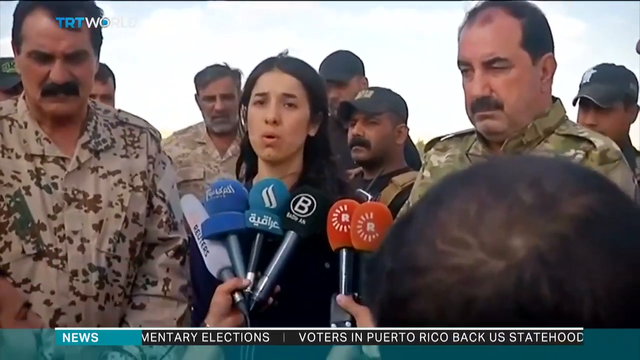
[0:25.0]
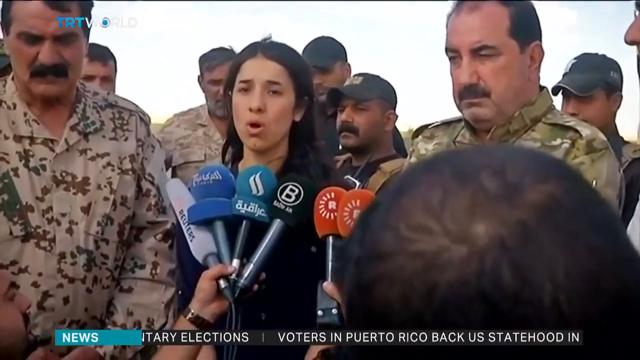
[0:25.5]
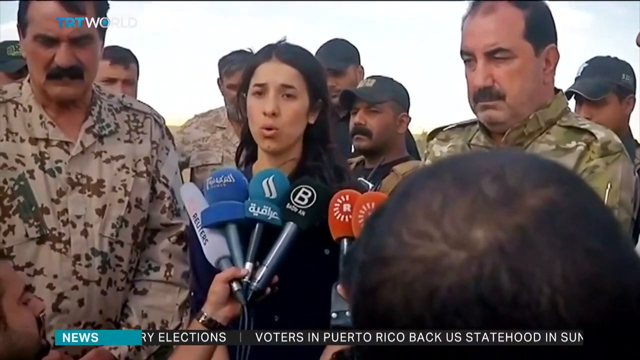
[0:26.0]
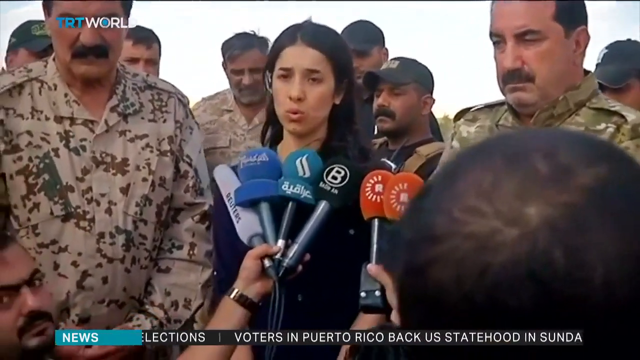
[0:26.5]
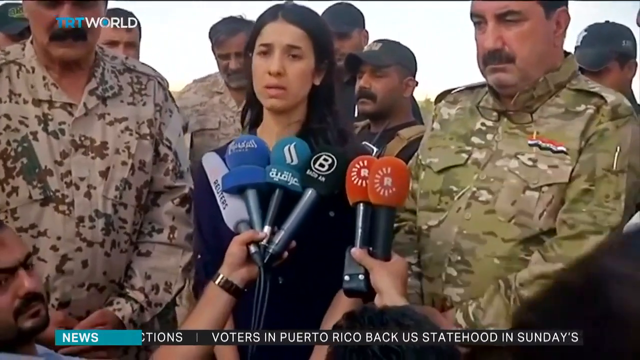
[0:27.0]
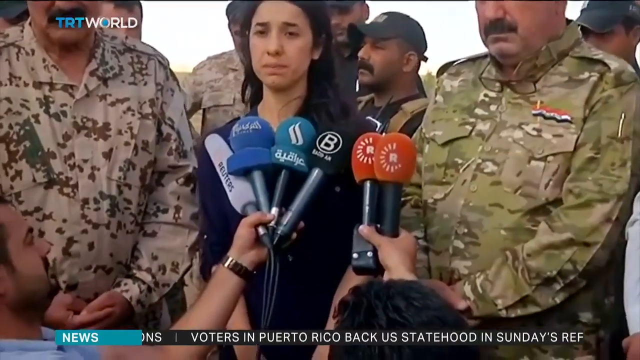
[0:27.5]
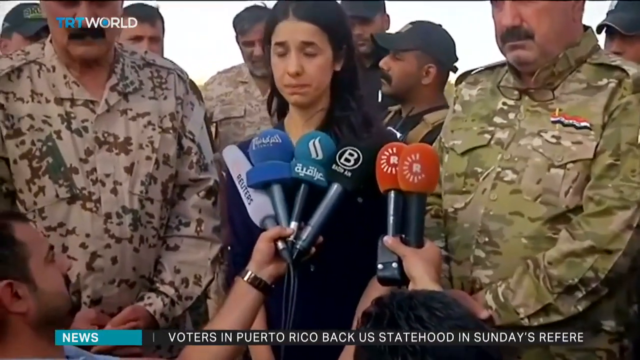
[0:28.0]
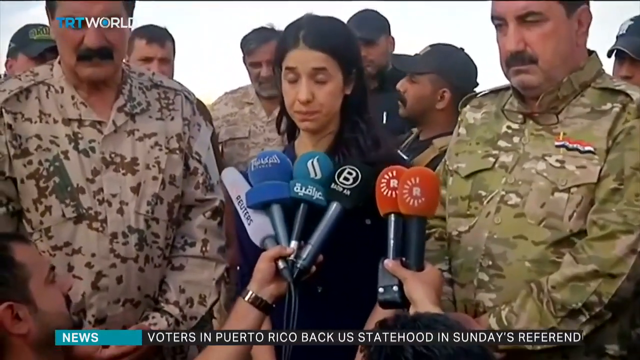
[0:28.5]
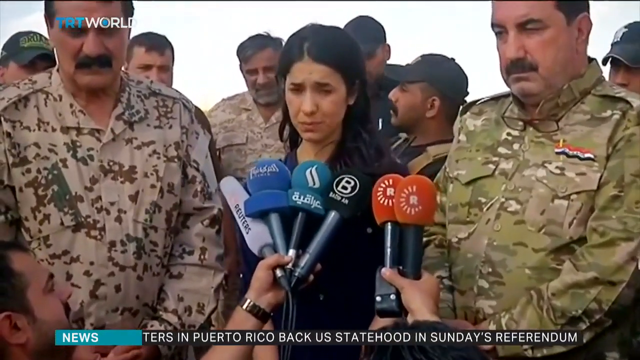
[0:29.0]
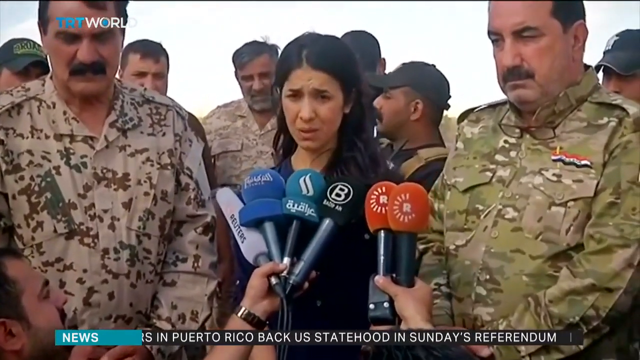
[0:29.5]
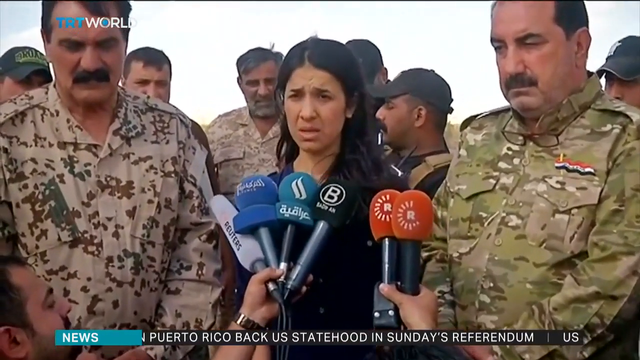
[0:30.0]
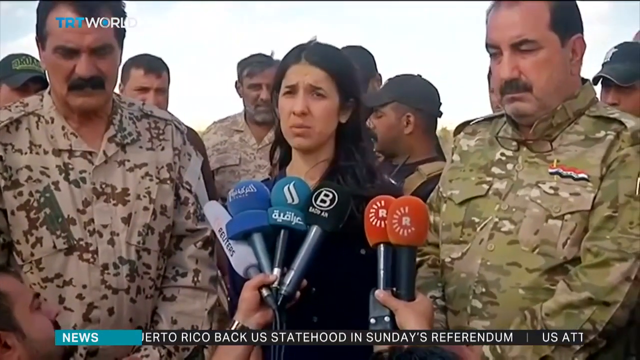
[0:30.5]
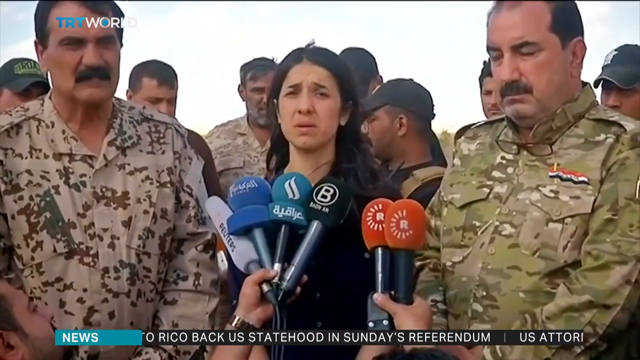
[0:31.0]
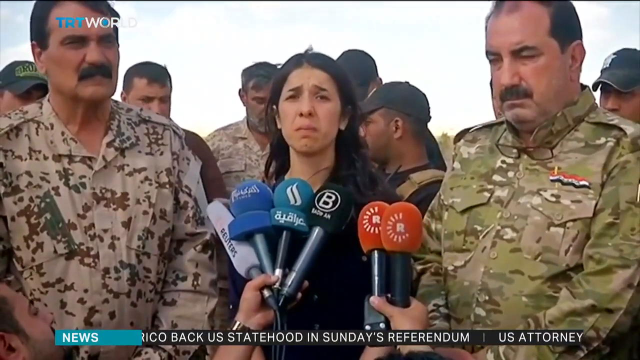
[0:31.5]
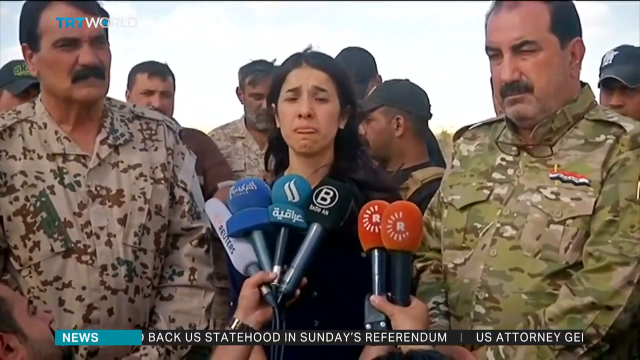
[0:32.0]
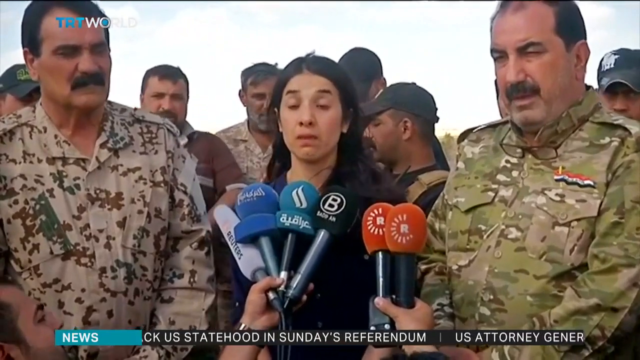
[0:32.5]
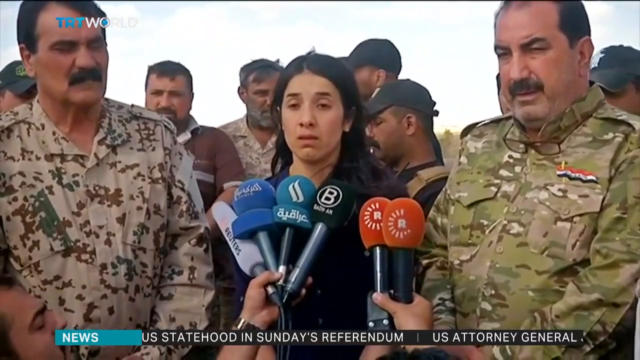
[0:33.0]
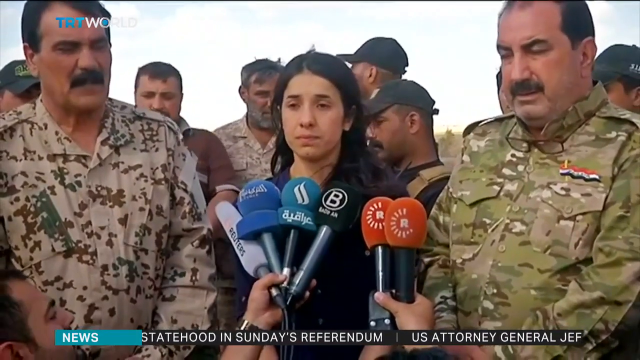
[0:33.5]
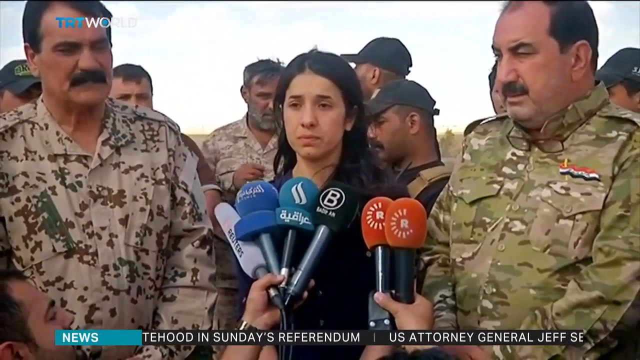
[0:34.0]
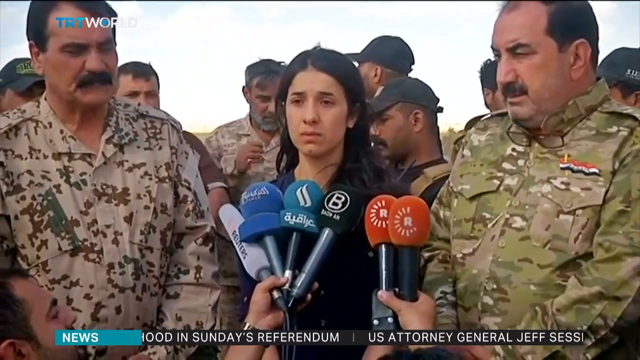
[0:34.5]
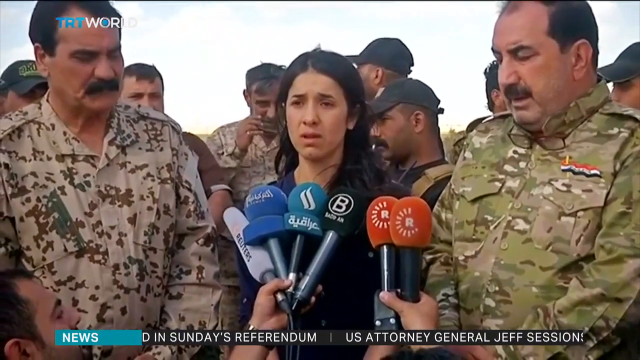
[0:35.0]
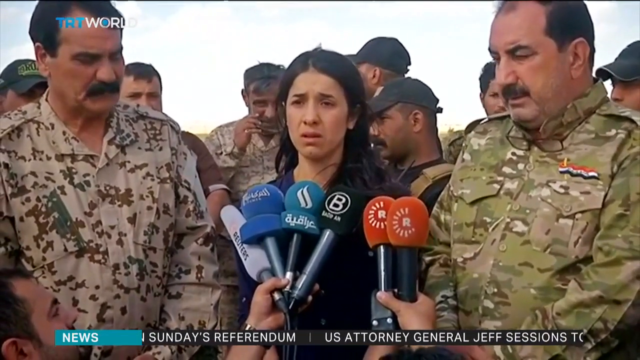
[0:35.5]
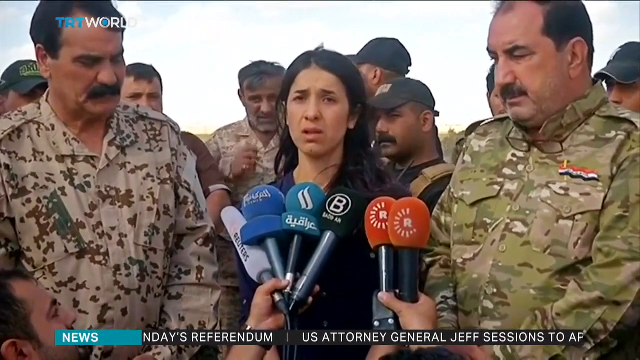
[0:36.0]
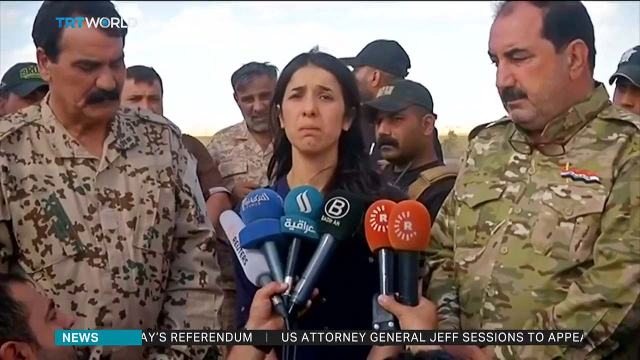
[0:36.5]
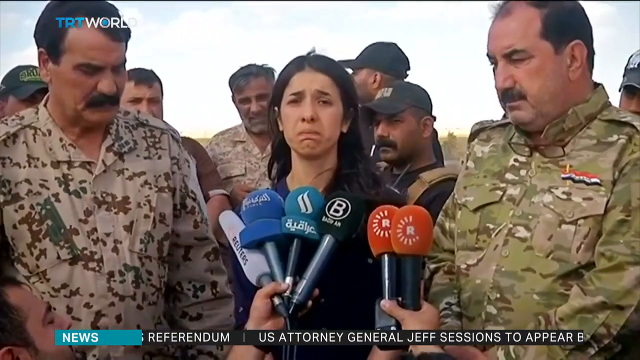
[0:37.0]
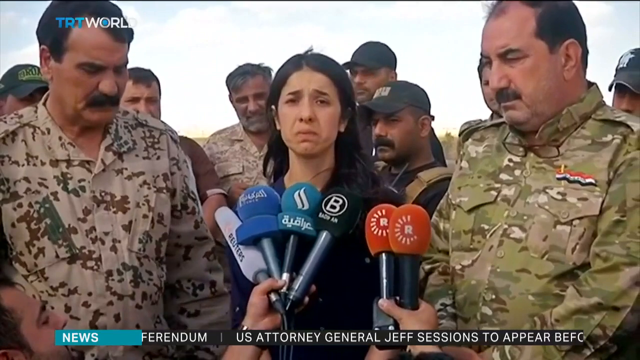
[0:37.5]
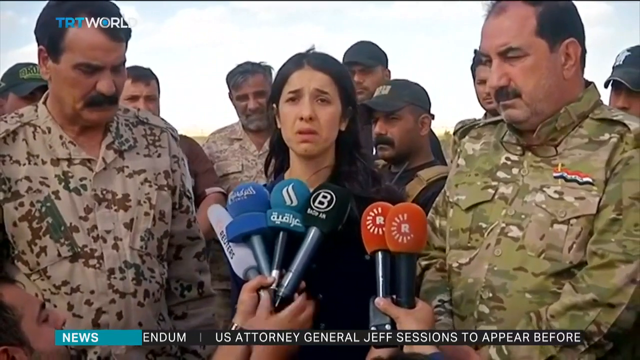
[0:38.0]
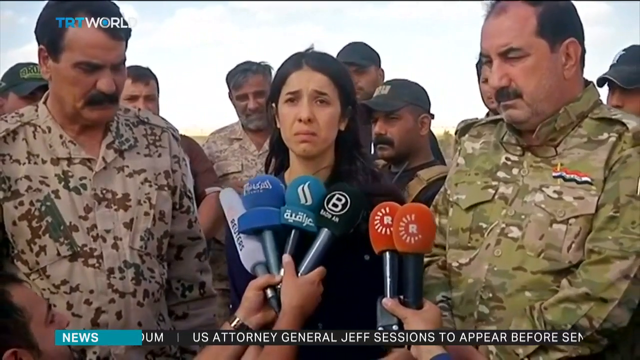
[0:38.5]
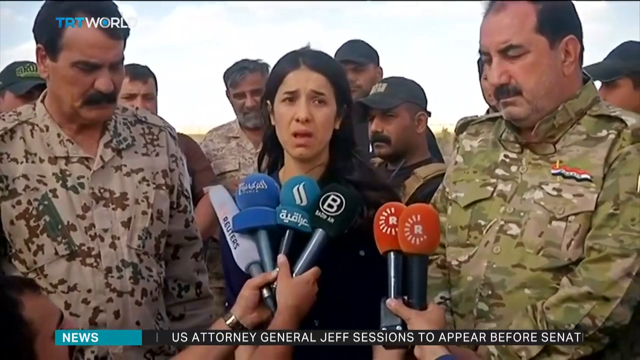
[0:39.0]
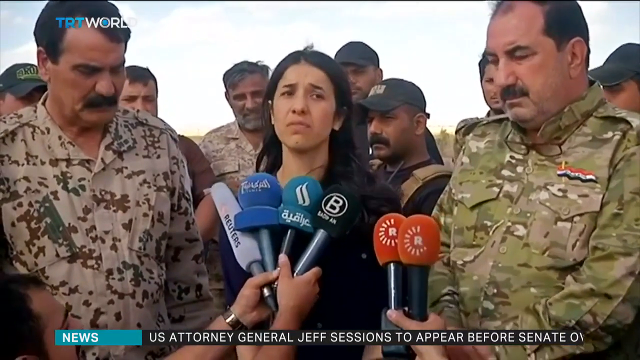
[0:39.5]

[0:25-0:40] A woman who has been released from being enslaved has dark hair and tan skin and wears a long dark blue dress that comes down to the elbows. She appears to be talking to a news crew, with at least six microphones in front of her. Two men who appear to be in the armed forces stand on either side of her. One has dark hair, is balding at the crown of his head, has a dark bushy mustache, and wears a collared shirt with long sleeves. On her other side is a dark-haired man who seems to be balding a bit at the temples, with a bushy dark mustache and dark bushy eyebrows; he also wears a beige multicolored uniform that appears to be maybe armed forces attire. The woman looks distressed, tired and weary. Standing behind her is a short man with tan skin and a bushy mustache, wearing a black baseball cap with some sort of white or yellow emblem on it and a tan tactical vest. At least seven other men stand behind her.